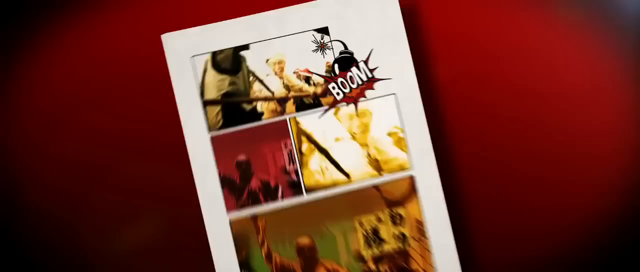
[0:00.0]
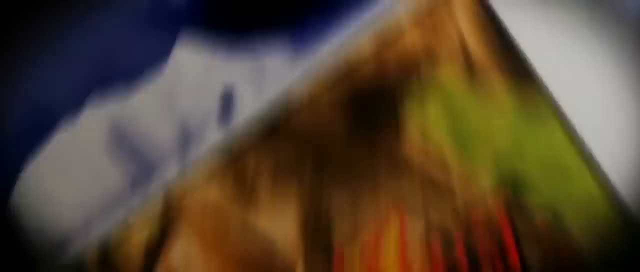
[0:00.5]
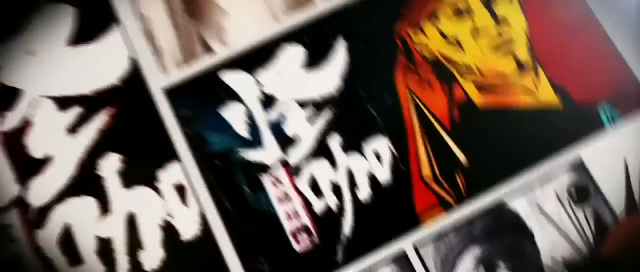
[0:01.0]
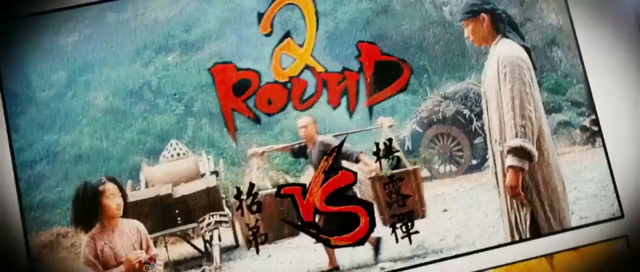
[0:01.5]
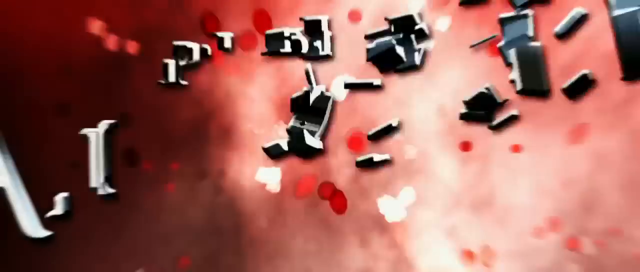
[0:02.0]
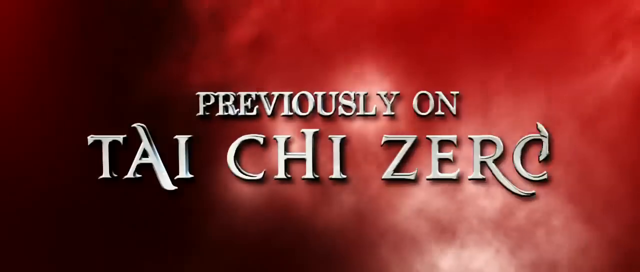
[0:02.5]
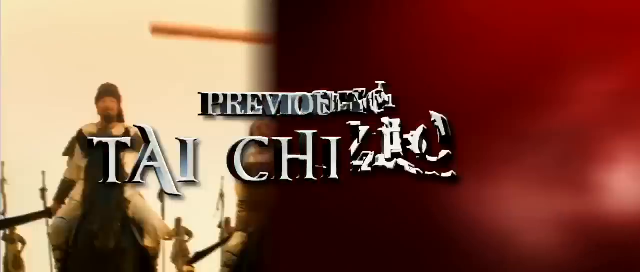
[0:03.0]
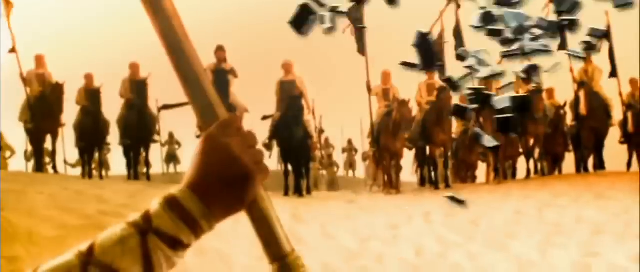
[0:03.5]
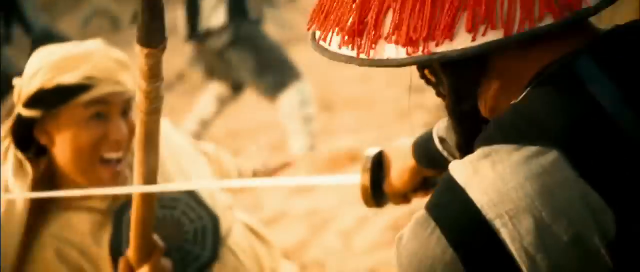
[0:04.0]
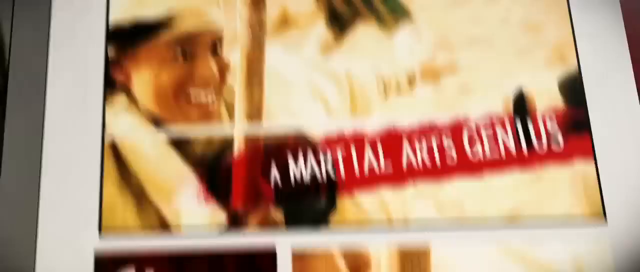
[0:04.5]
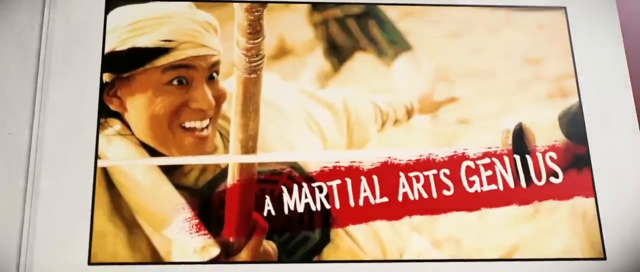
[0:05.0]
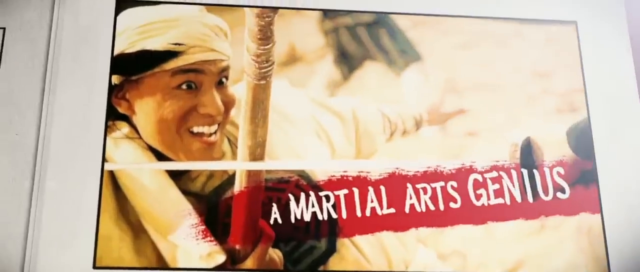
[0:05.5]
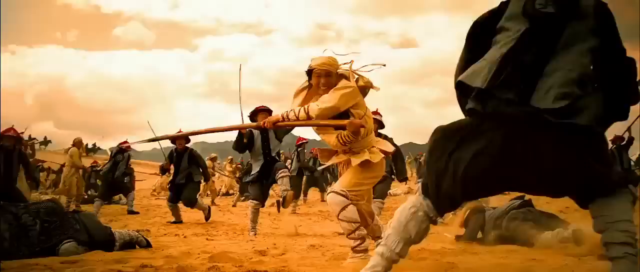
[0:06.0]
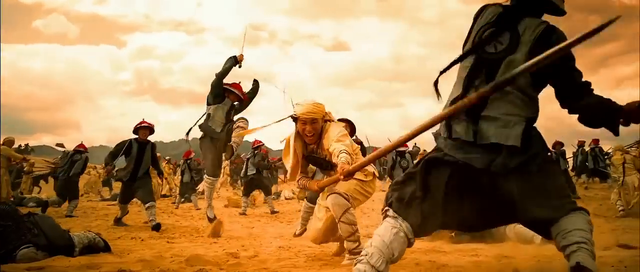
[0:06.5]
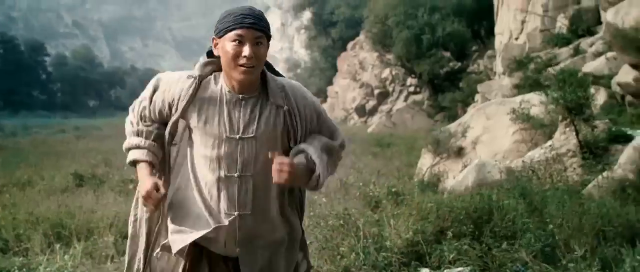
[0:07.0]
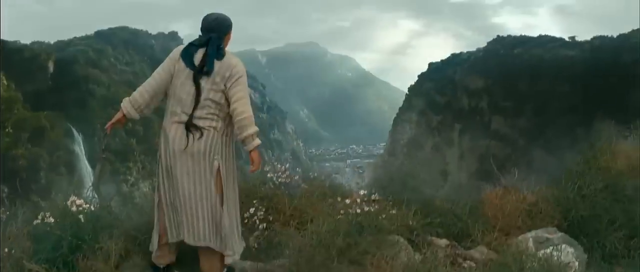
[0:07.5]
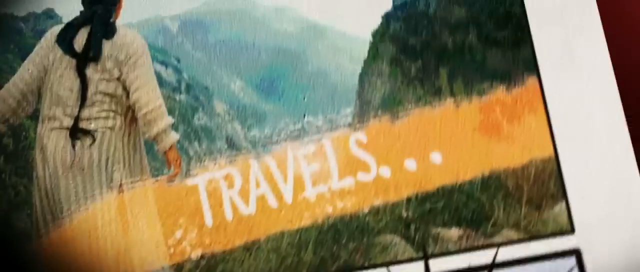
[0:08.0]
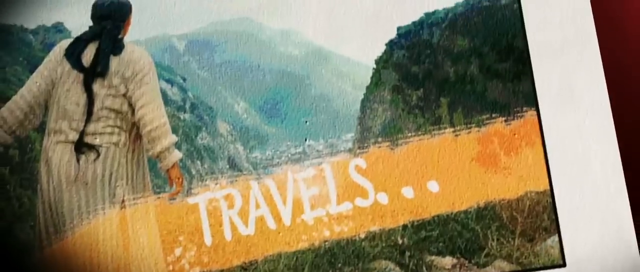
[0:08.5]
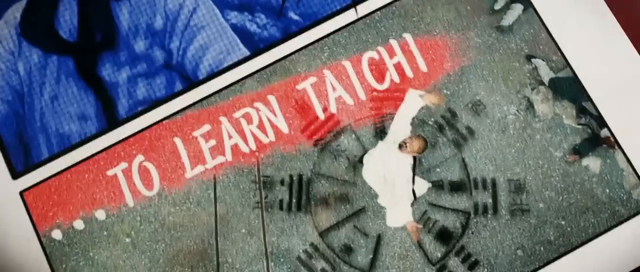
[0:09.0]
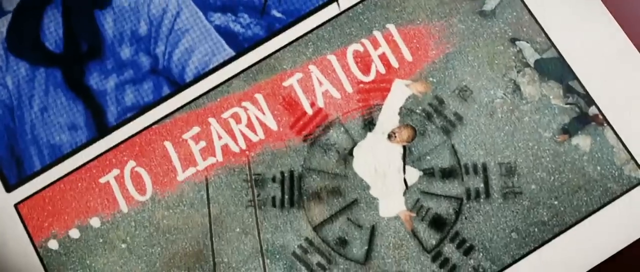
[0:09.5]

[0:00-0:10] The video begins as a trailer for the U.S. release of Tai Chi Hero. Martial artists are dressed in antique or historical-themed costumes, and various weapons are used, such as a long pole and swords. Pictures from a comic book are shown, capturing parts of the video as illustrations. The words "Tai Chi" appear throughout the video, and the comic book indicates that the person is a martial arts genius who travels to learn Tai Chi. On a battlefield, the protagonist fights what appears to be an army of men using martial arts and a long pole.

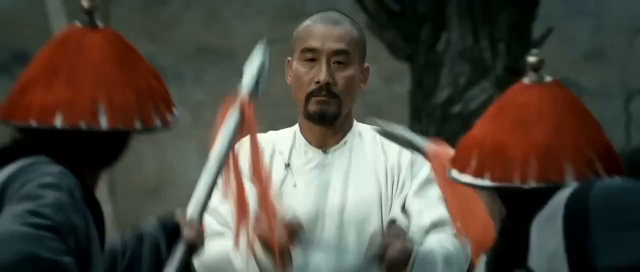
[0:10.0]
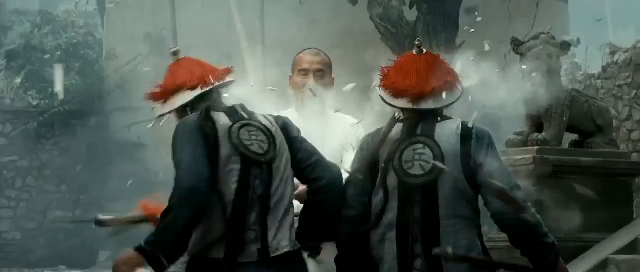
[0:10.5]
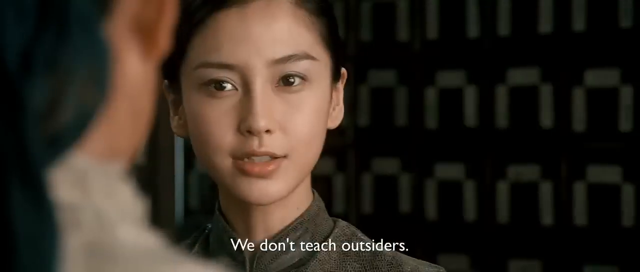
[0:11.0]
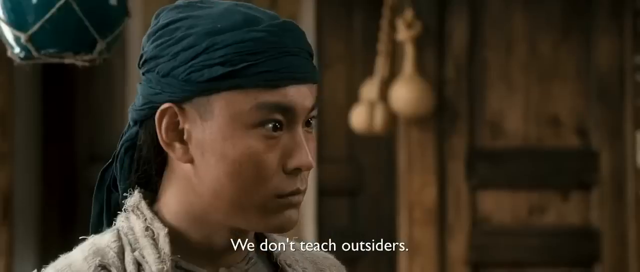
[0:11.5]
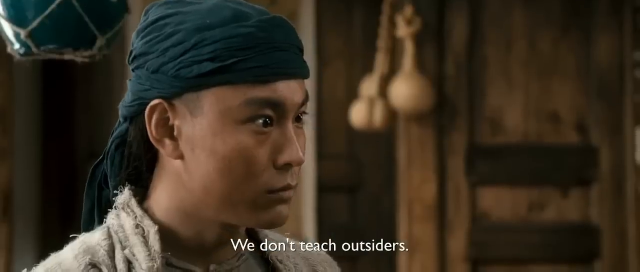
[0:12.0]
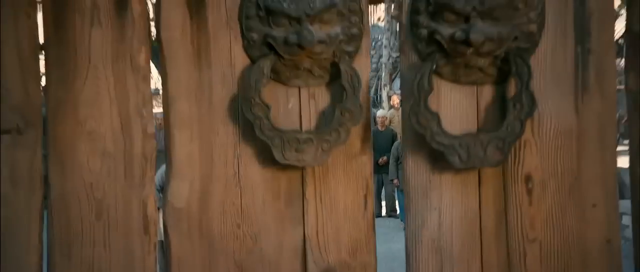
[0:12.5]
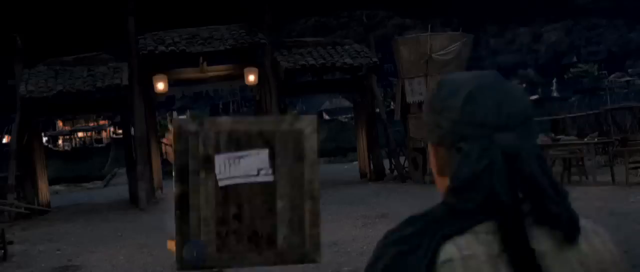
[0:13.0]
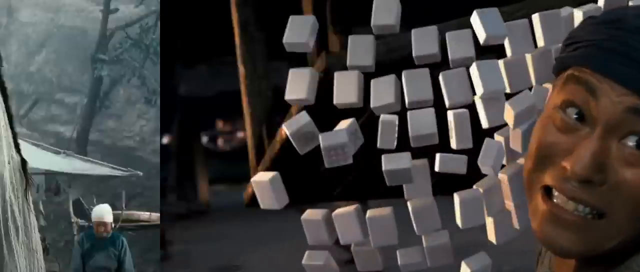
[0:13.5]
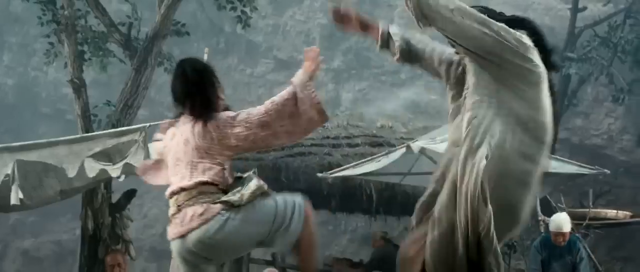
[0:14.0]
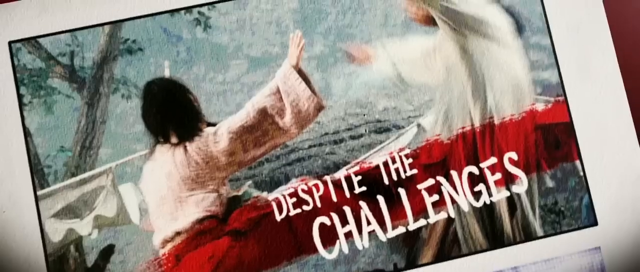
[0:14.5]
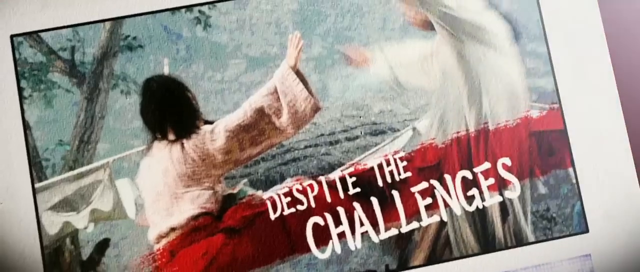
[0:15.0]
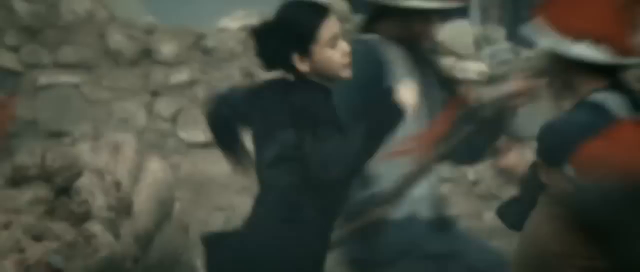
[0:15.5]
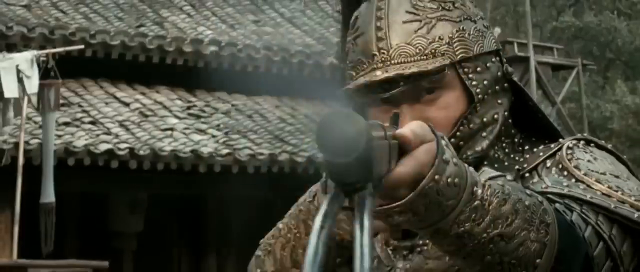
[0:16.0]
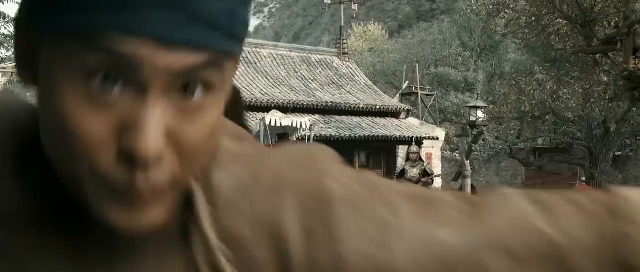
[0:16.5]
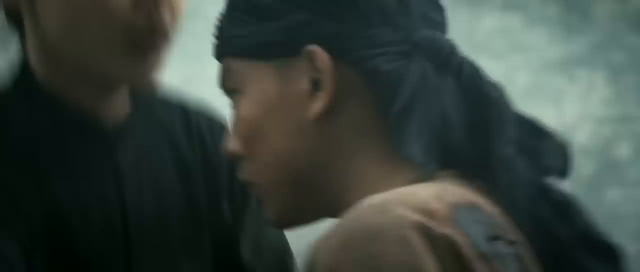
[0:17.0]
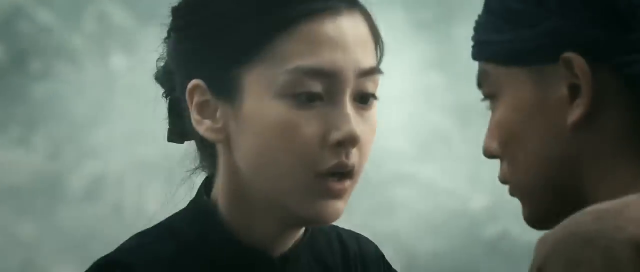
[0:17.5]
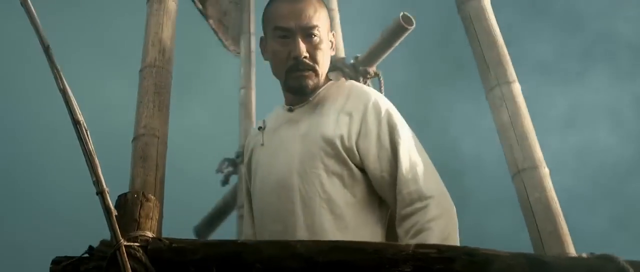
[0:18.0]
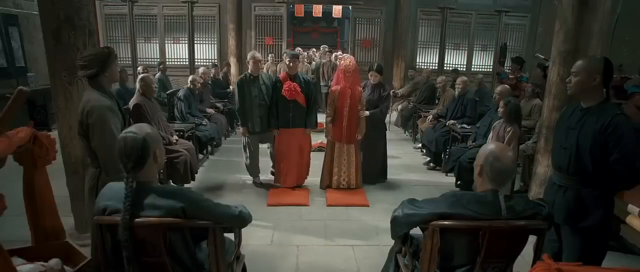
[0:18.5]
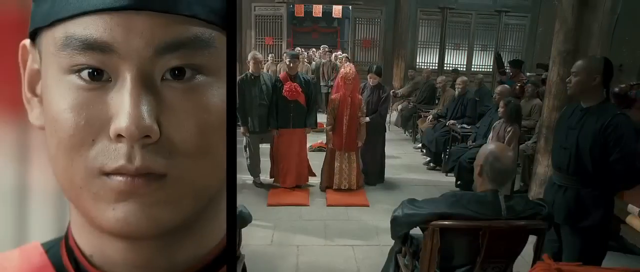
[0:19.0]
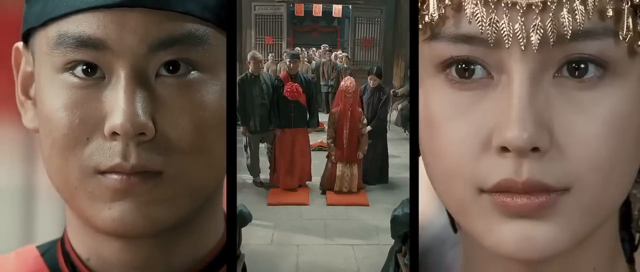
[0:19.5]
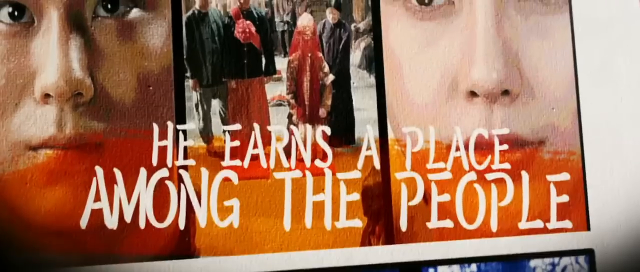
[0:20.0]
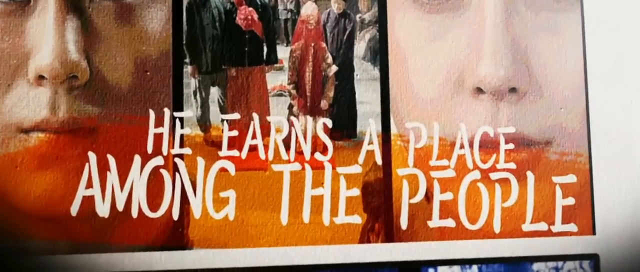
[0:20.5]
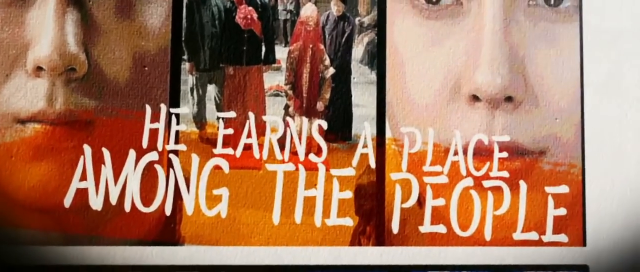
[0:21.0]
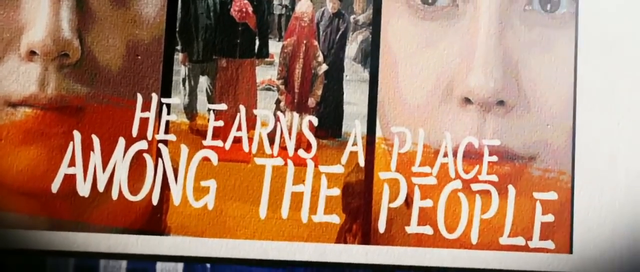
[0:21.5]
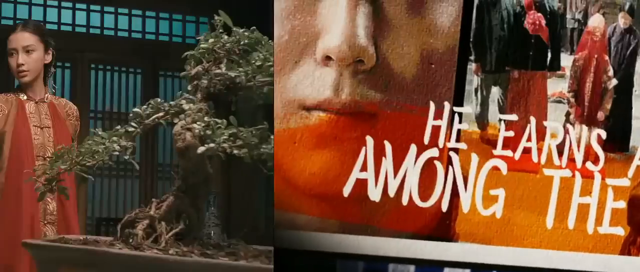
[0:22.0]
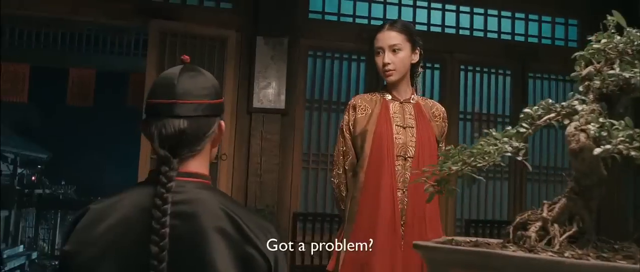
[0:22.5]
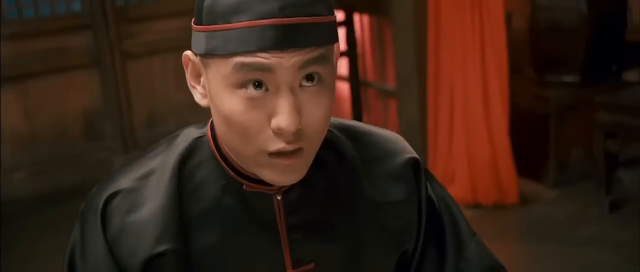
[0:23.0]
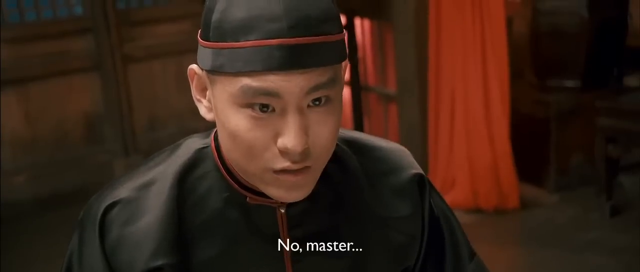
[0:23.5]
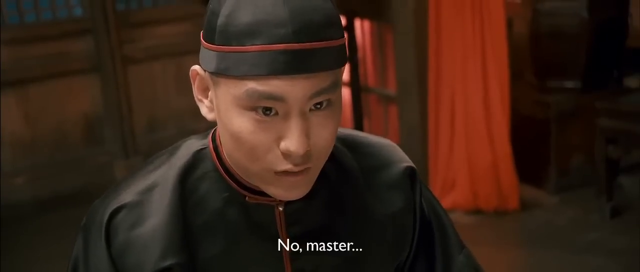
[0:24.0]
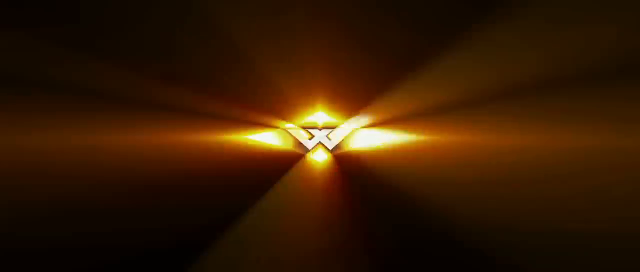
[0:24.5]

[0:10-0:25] A man dressed in white knocks out two others dressed in black. He appears to be bald and is very likely some kind of martial arts instructor; he has a mustache and a goatee. Comic book images depict parts of the movie and say that the character is undergoing challenges to earn his place among the people. There is footage of a woman who seems to be a master of martial arts, and there are battle scenes. In one area many of the cast seem to be gathered in some kind of ceremony, with two people in the crowd wearing some kind of red robe, suggesting there might be an official ceremony.